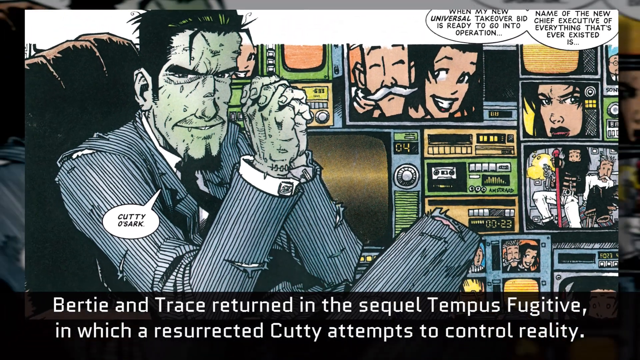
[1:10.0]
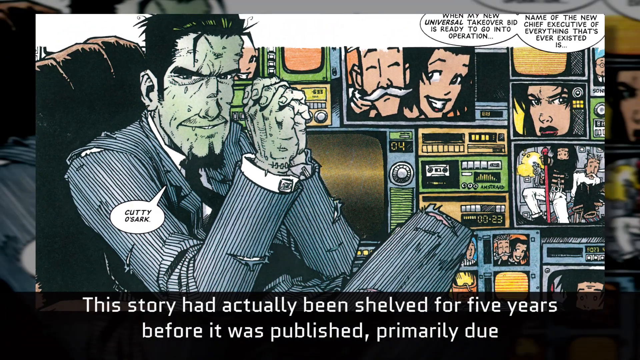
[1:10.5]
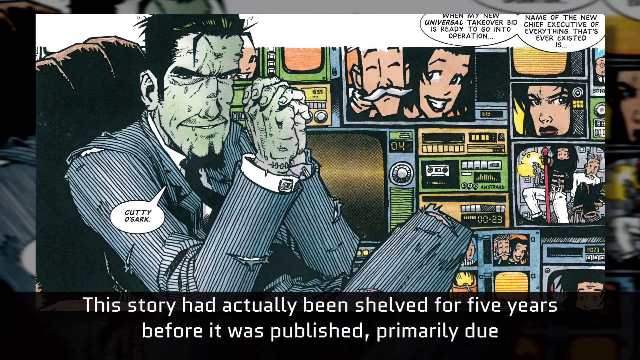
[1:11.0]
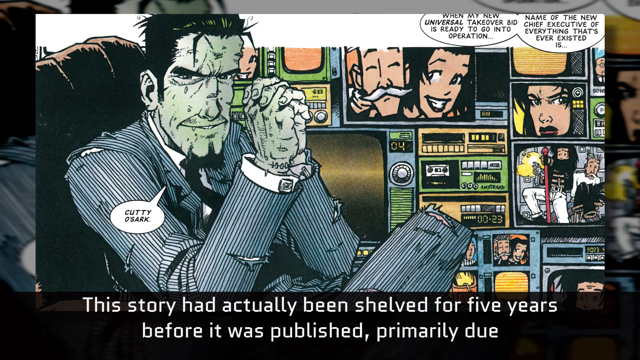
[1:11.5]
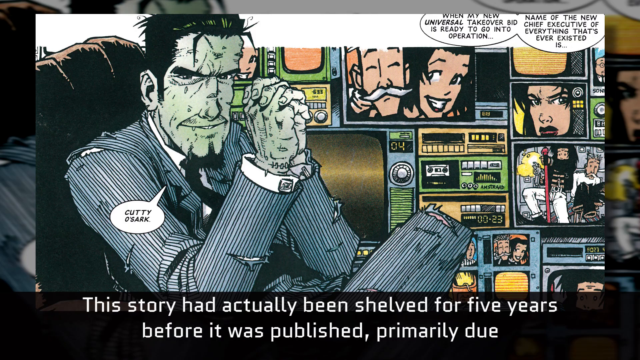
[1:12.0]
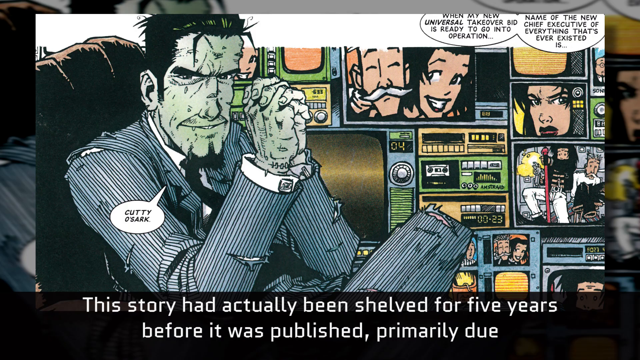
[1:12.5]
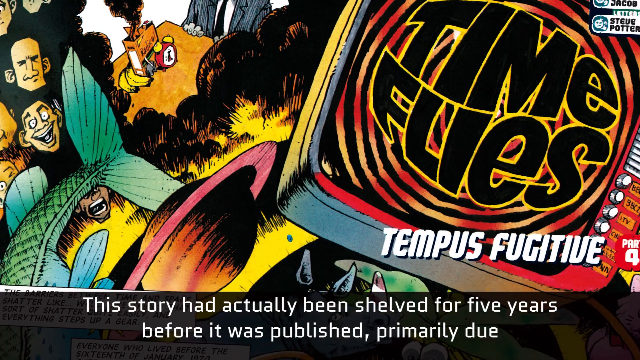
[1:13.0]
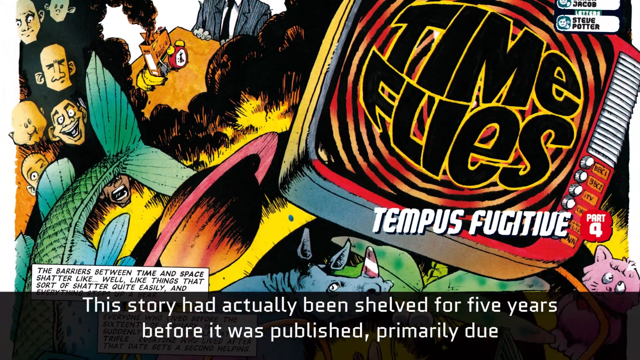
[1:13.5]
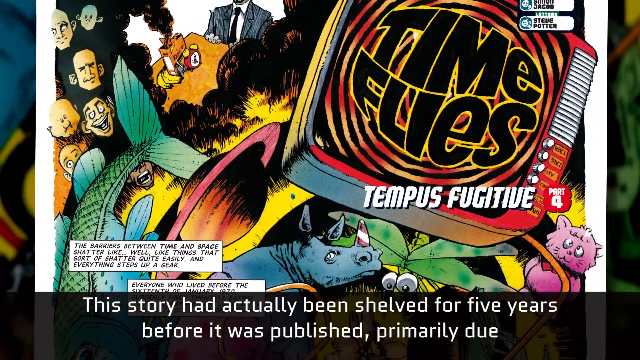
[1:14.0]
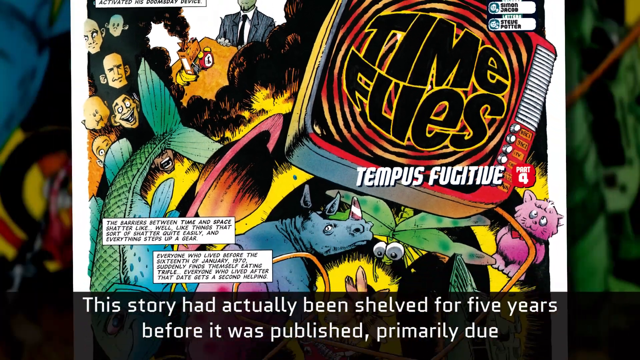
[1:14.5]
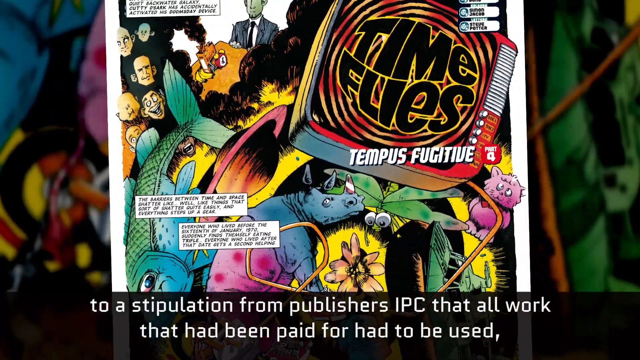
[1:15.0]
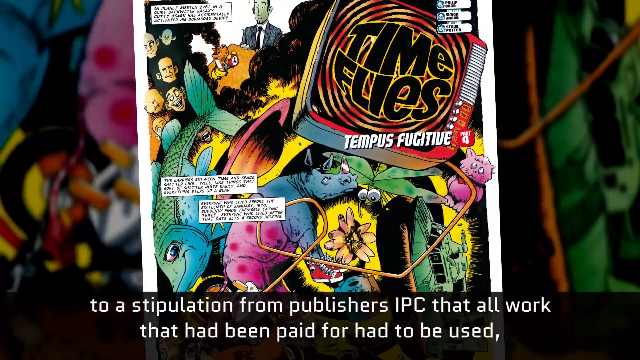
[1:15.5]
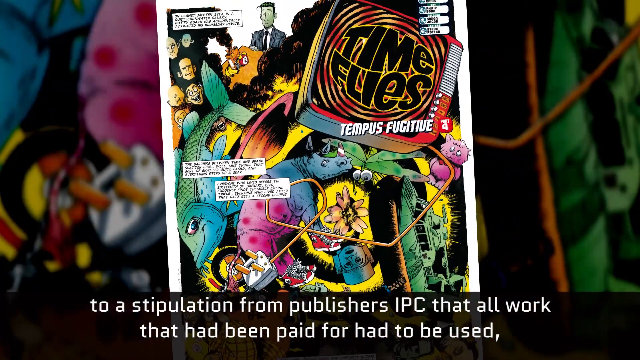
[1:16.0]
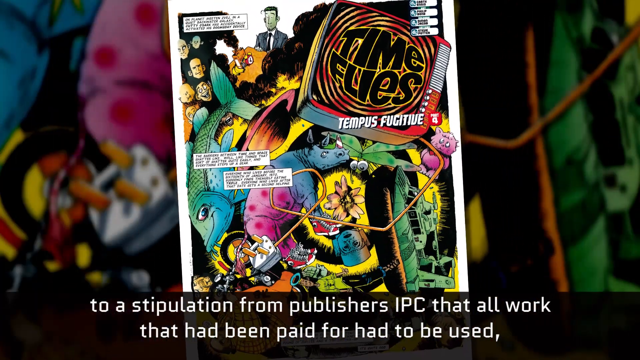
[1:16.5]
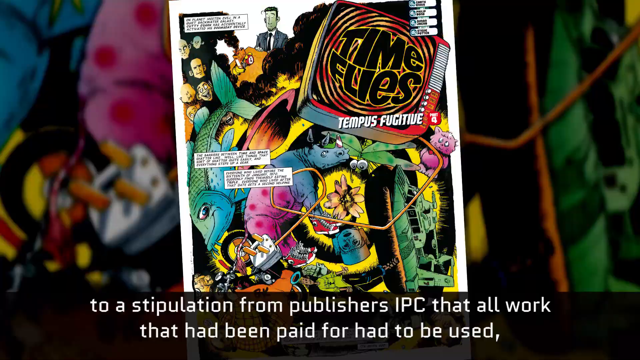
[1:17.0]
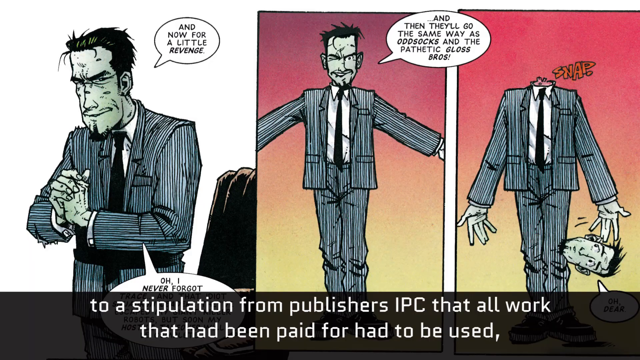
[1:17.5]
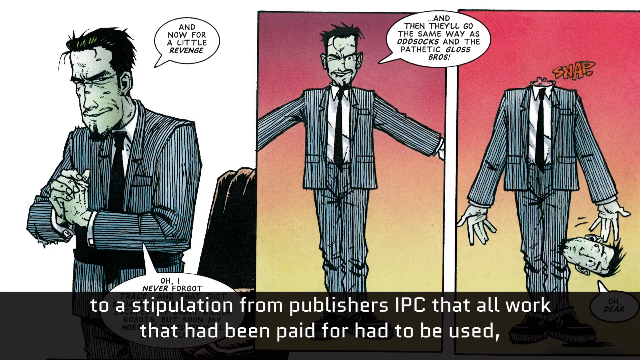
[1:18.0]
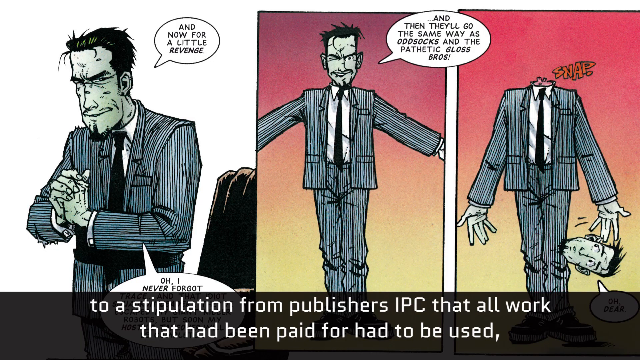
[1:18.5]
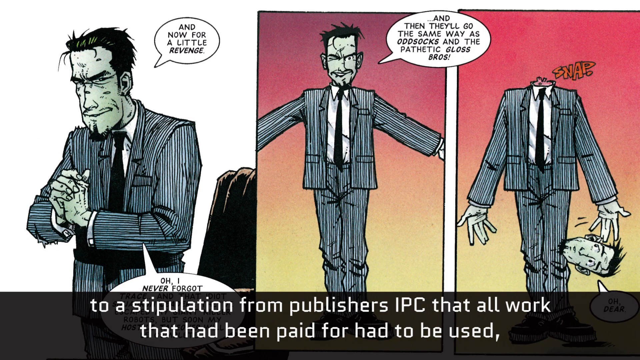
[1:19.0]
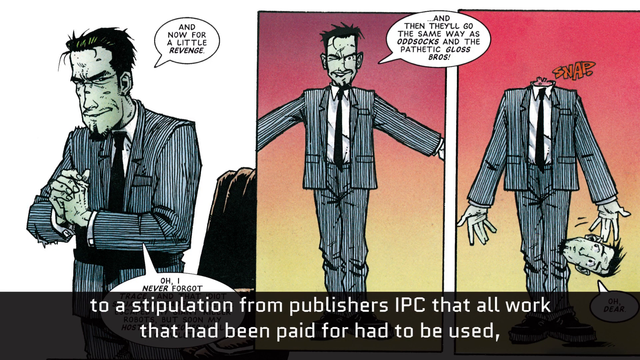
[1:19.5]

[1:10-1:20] The inside of the comic with Frankenstein is shown, then the video cuts to another comic called Time Fly's Temperance Fugitive, with planets, fish and faces to the left, explosions, and an alarm clock. Text at the bottom says "this story has actually been shelved for five years before it was published, primarily due to a stipulation from the publisher's IPC that all work that had been paid for had to be used." The view pans out to show more of the comic strip, with submarines, pink cats, flowers and rain. The video cuts to another part of the comic where Frankenstein, wearing a pinstripe suit, says "now for a little revenge", and in the next panel "and they'll go the same way as odd socks and the pathetic ghost brothers". Then Frankenstein's head falls off, and writing appears at the bottom.